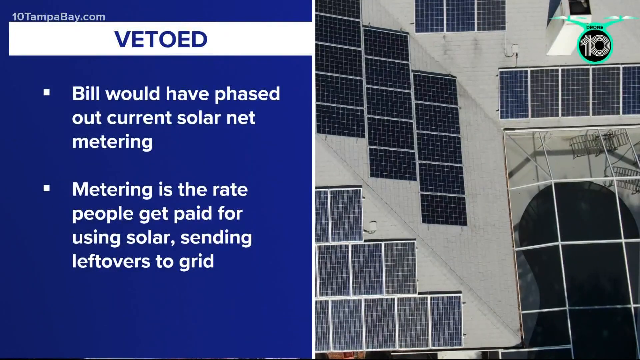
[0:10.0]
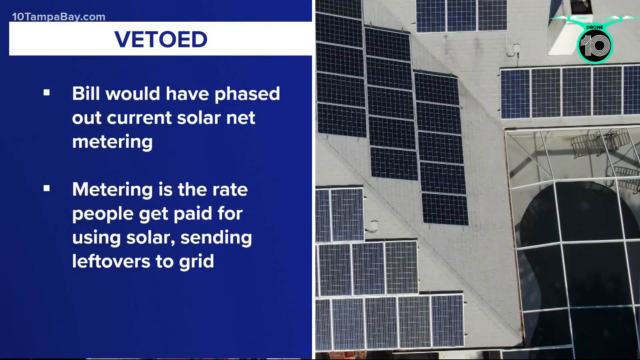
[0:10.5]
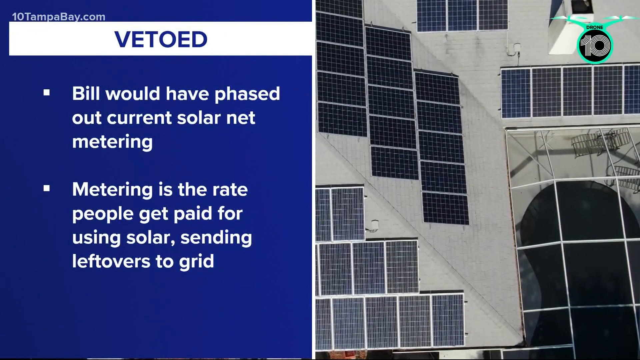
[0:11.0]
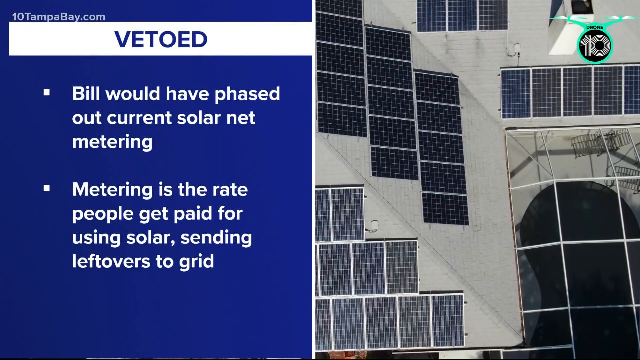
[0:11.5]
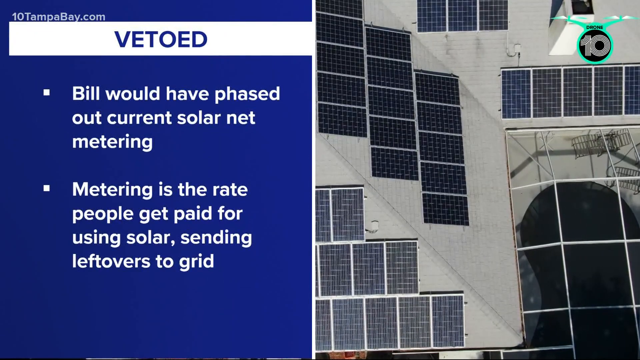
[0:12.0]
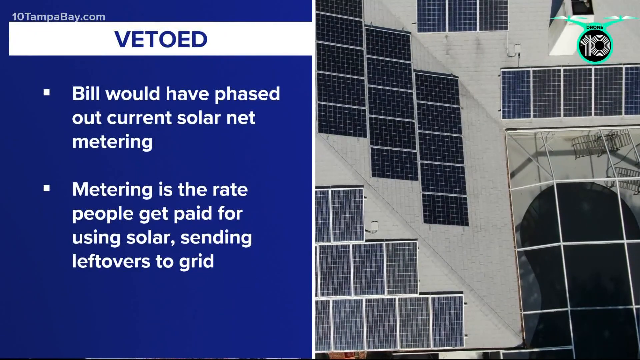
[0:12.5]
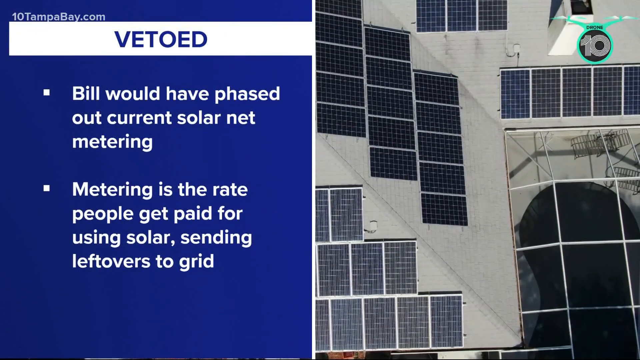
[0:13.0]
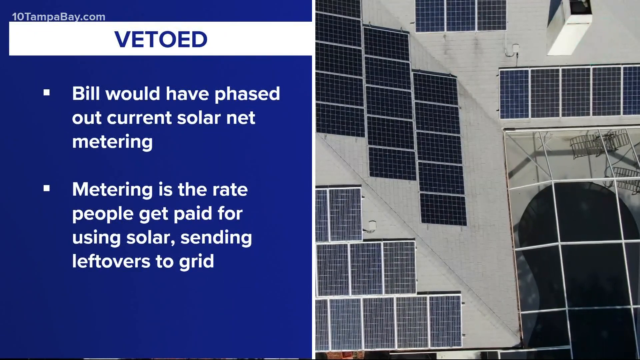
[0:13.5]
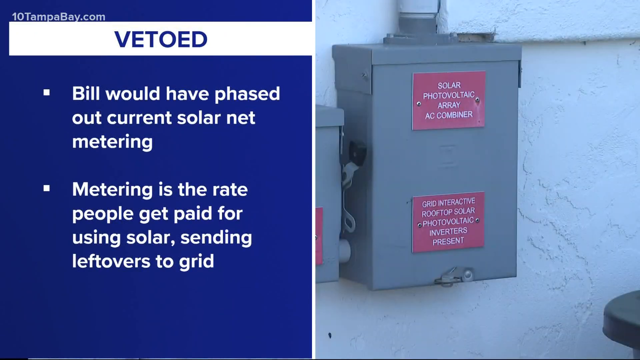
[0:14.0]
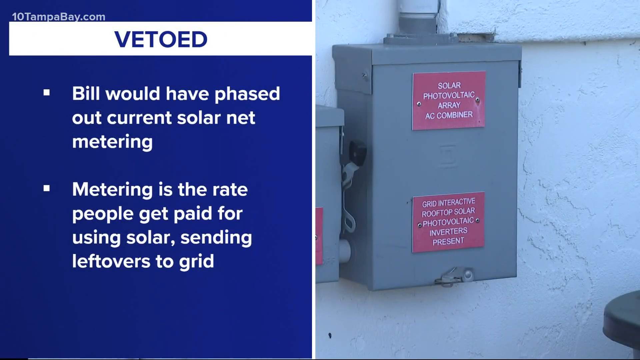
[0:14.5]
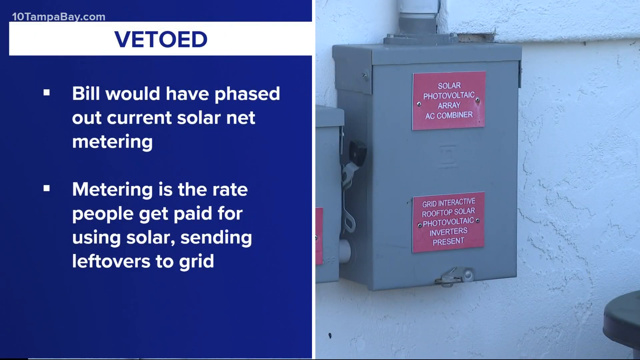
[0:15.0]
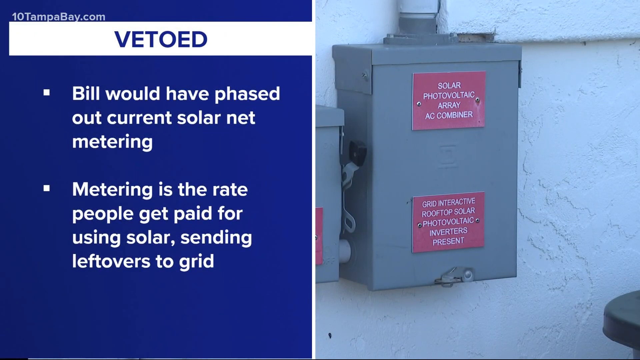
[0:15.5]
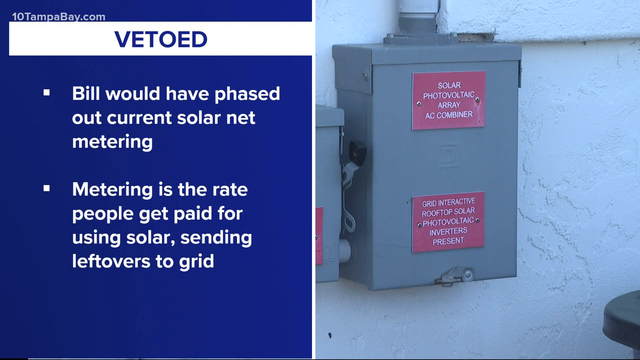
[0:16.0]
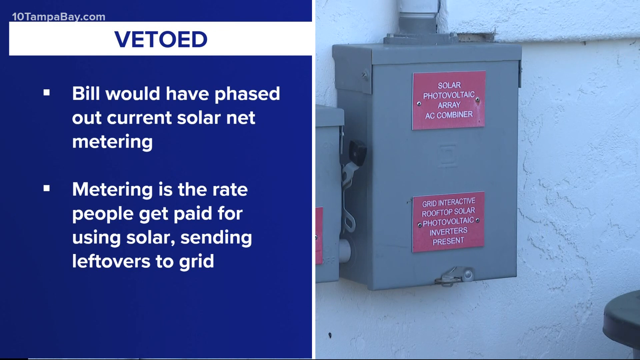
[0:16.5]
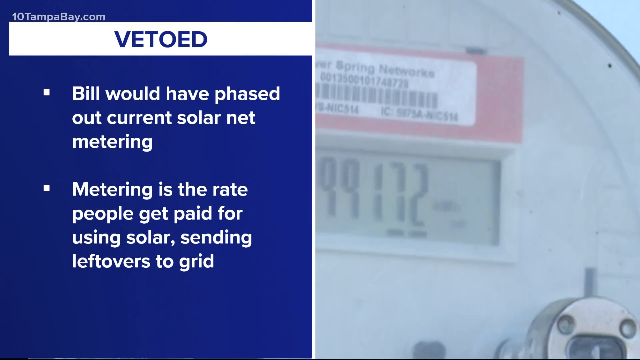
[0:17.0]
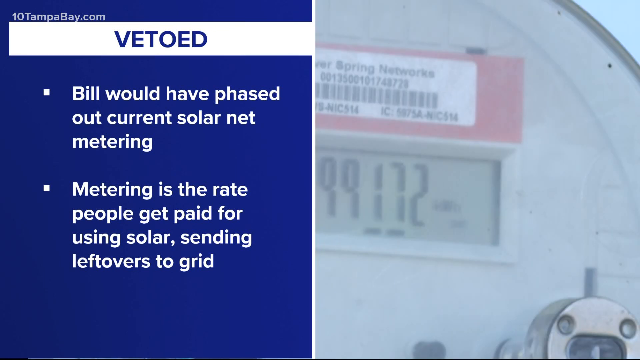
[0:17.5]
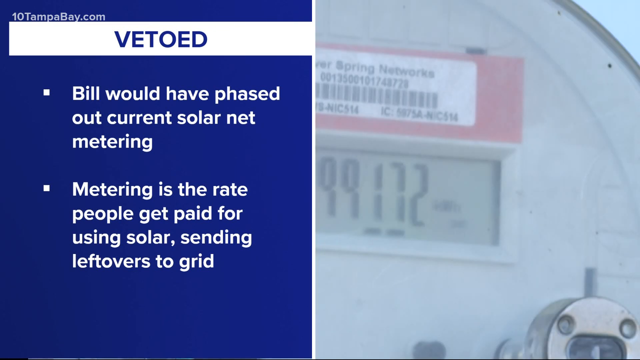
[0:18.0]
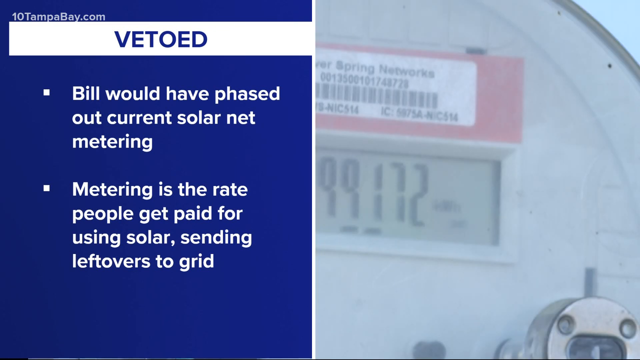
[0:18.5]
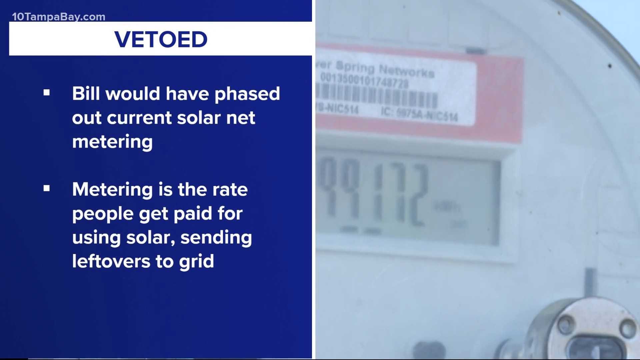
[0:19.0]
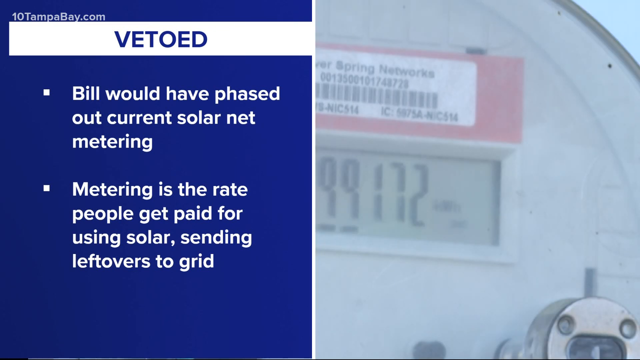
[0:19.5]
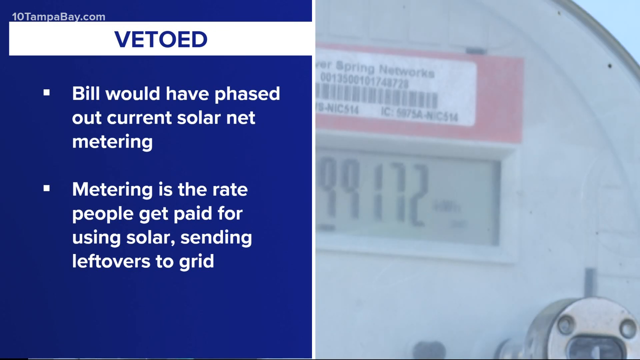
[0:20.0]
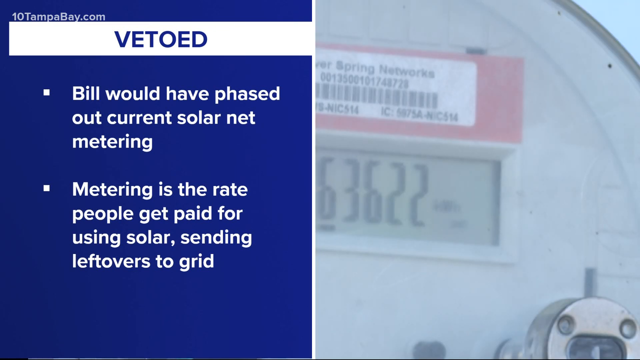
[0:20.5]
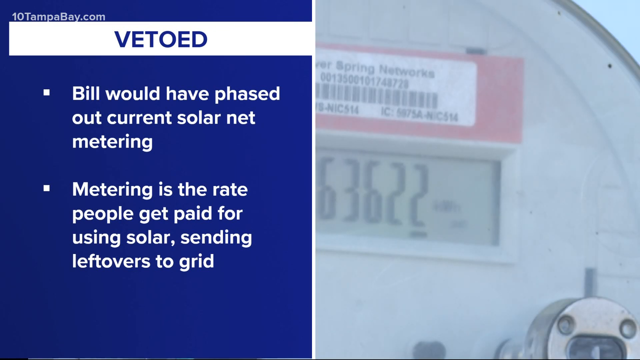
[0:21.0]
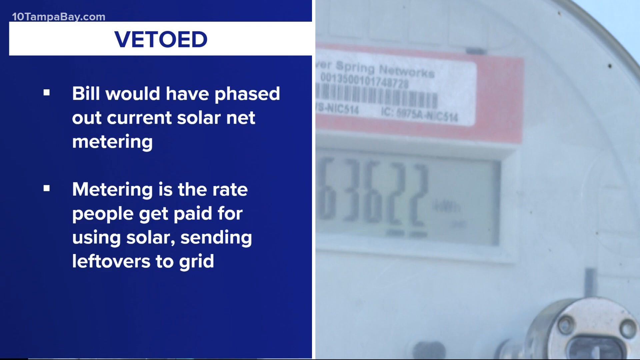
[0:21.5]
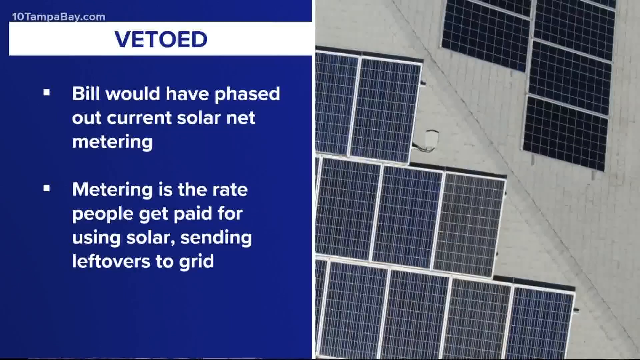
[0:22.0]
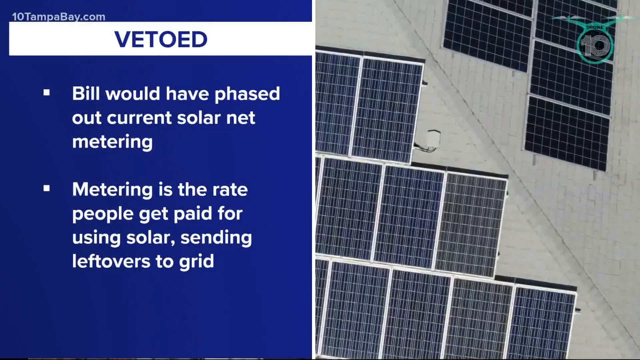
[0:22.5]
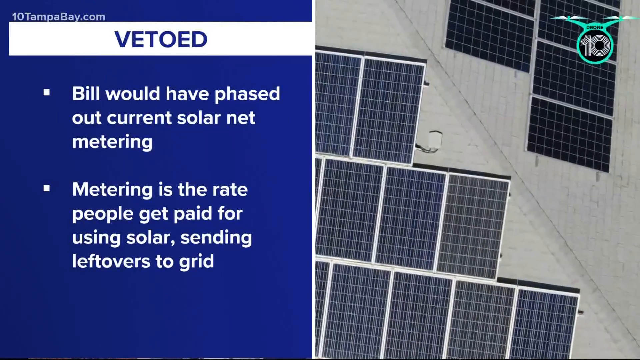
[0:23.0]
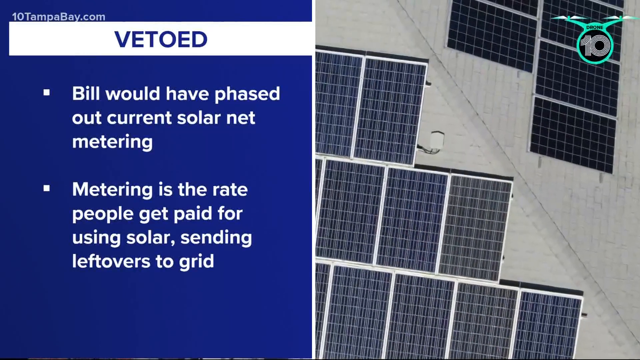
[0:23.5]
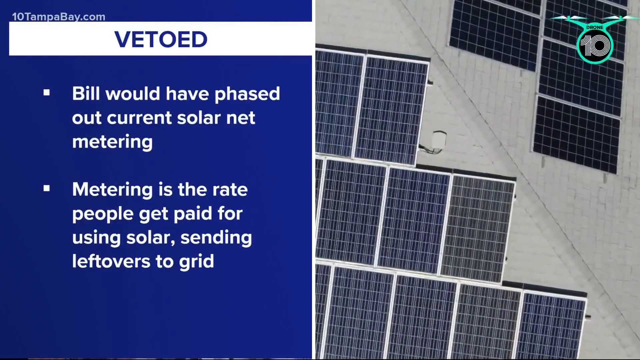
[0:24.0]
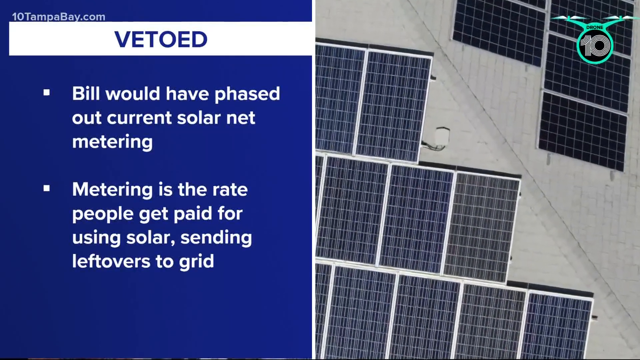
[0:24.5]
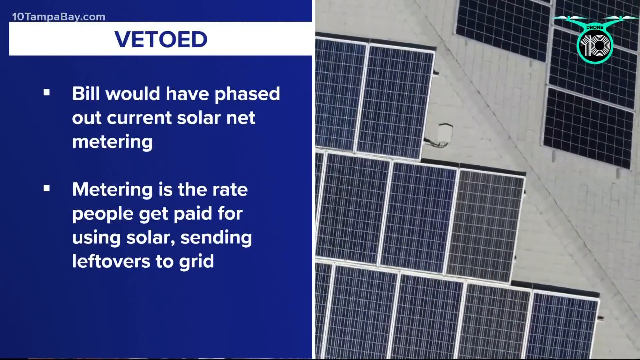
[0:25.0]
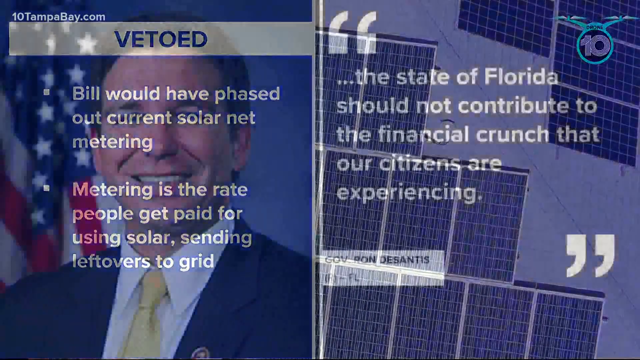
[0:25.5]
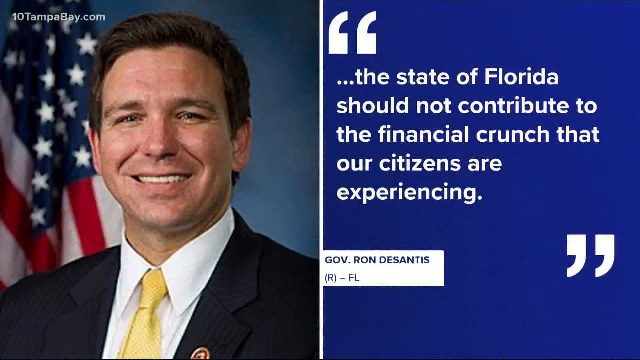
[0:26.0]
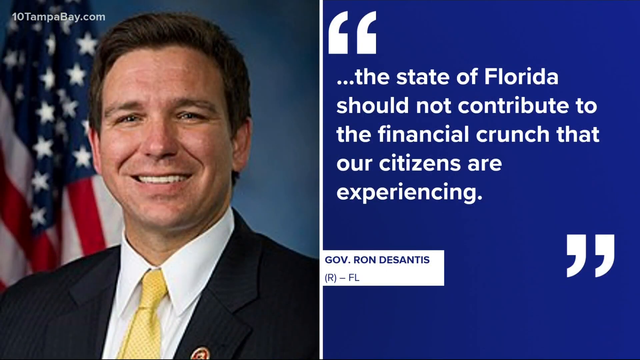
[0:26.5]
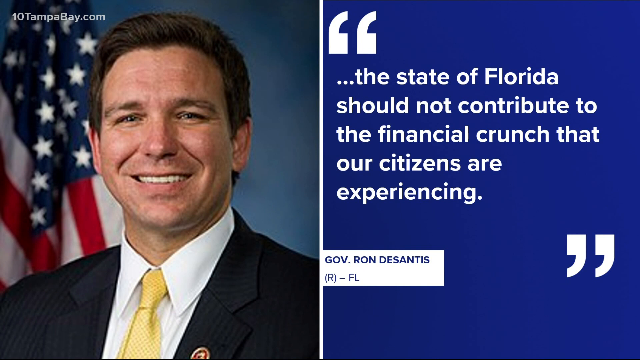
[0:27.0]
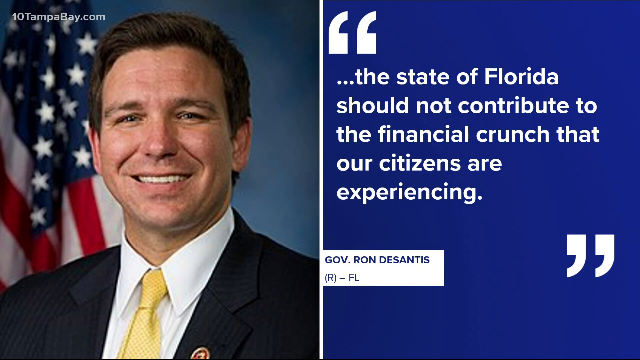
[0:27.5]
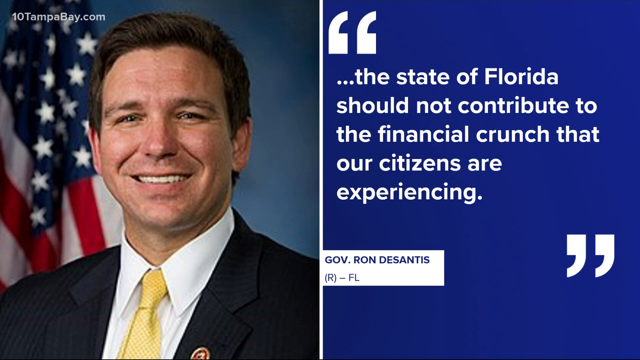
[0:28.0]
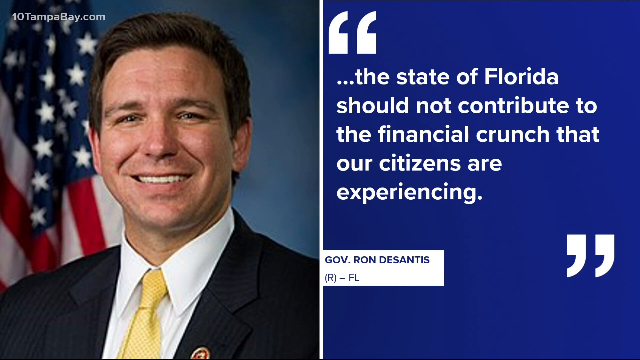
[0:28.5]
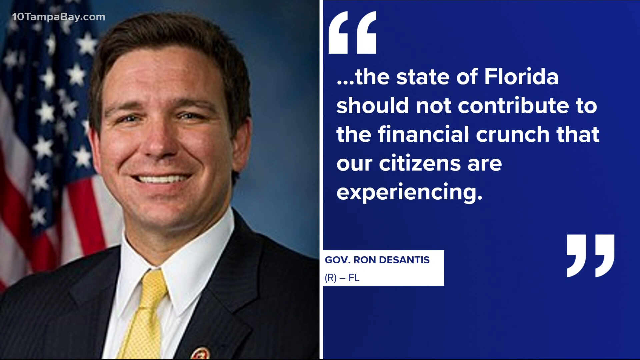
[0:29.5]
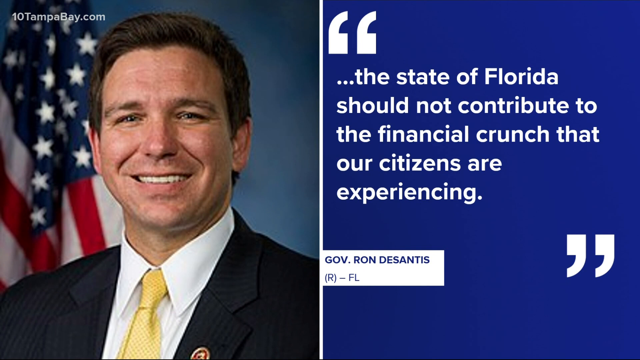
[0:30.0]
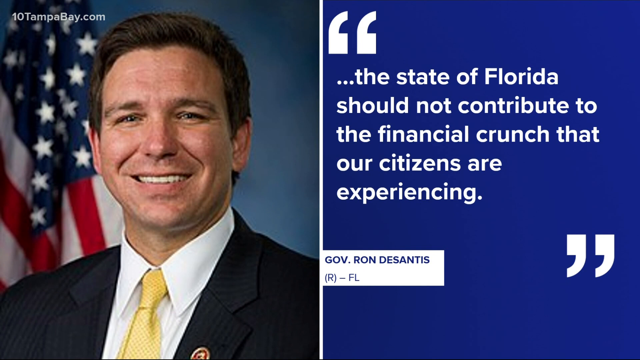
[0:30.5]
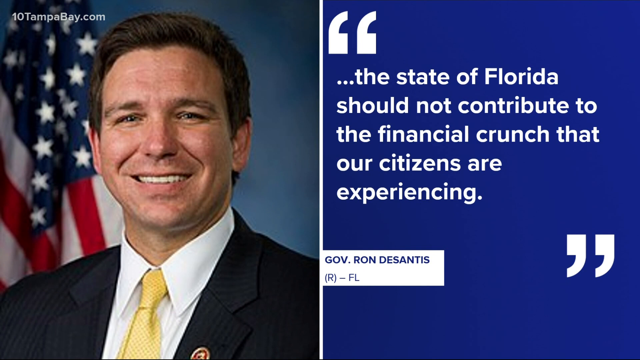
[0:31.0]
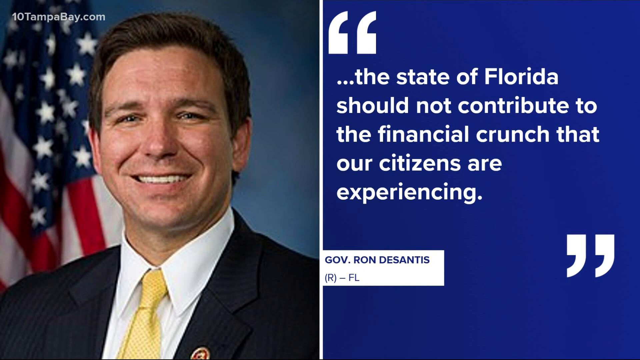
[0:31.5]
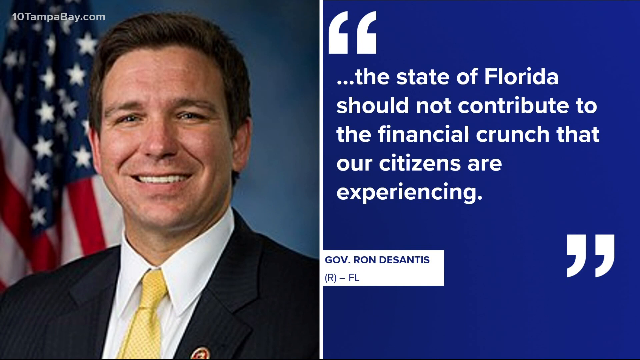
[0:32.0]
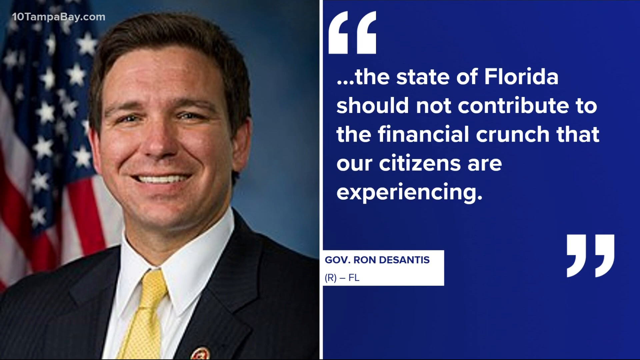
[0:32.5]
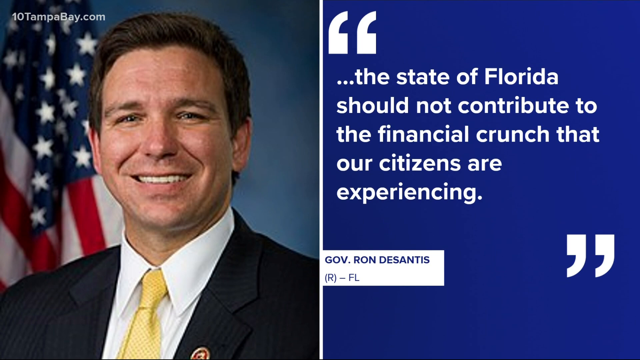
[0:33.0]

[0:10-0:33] The news report continues with the screen split vertically in two. On the left is a blue frame with white text; the title at the top, on a white horizontal strip, reads "VETOED". Below it, on the blue background, are two bullet points in white text: the first reads "Bill would have phased out current solar net metering," and the second begins "Metering is the rate people get paid for using solar". On the right side of the screen are solar panels: 8 panels, each with 5 grids. Next comes a meter locked in a gray metal box with two red labels on it, part of a solar photovoltaic array. The meter is then shown reading the solar energy passage rate. The split screen with the solar panels appears briefly once more. Then another split screen shows an image of the governor of Florida, Ron DeSantis, on the left, and on the right the text "The state of Florida should not contribute to the financial crunch that our citizens are experiencing. Governor Ron DeSantis."